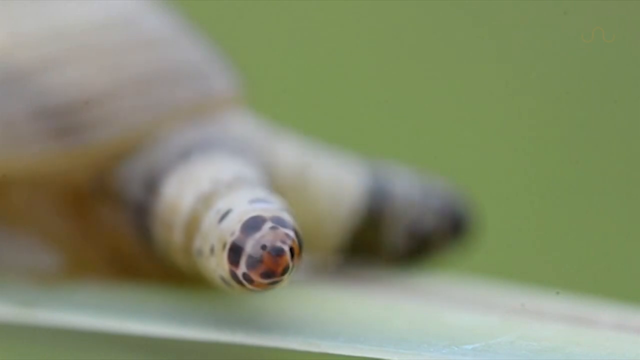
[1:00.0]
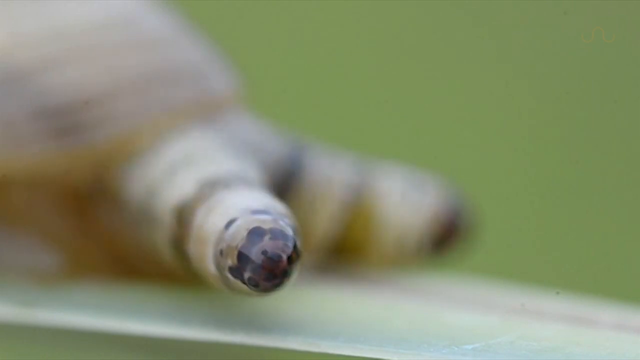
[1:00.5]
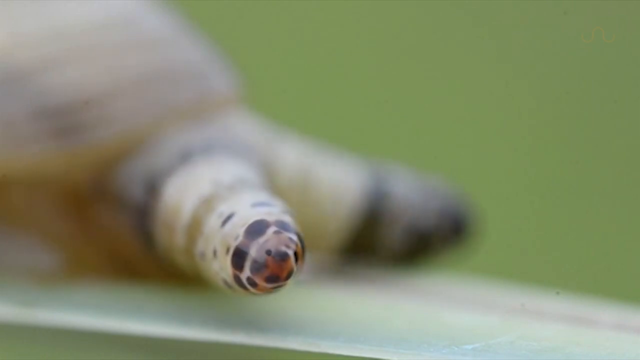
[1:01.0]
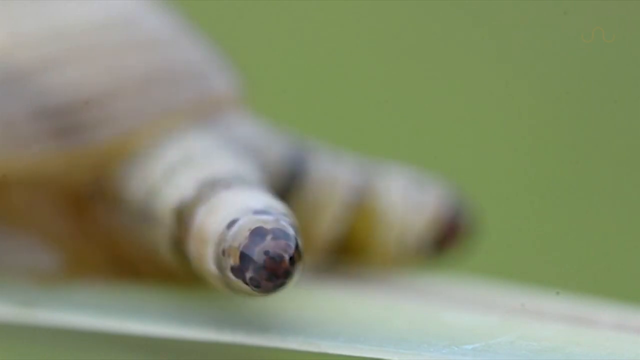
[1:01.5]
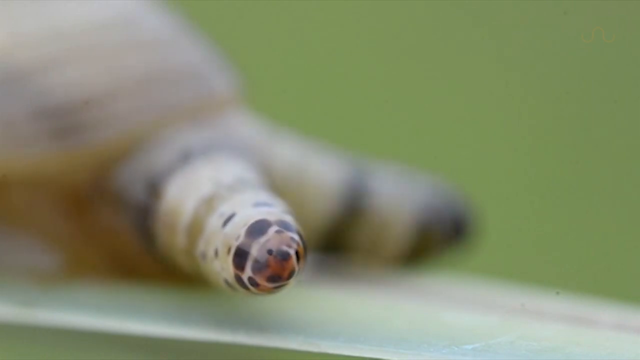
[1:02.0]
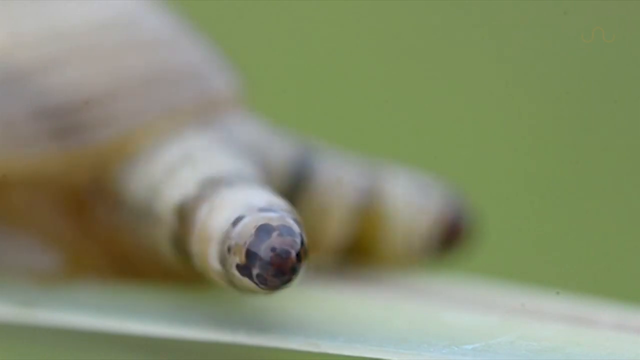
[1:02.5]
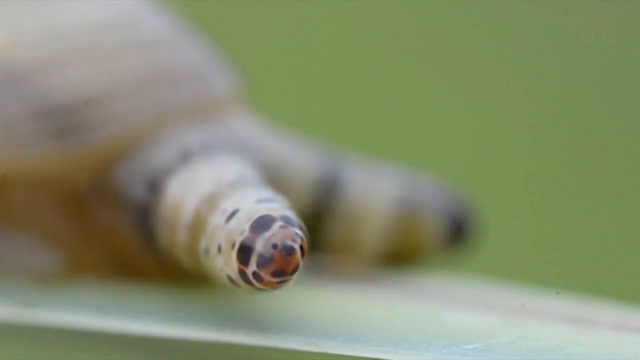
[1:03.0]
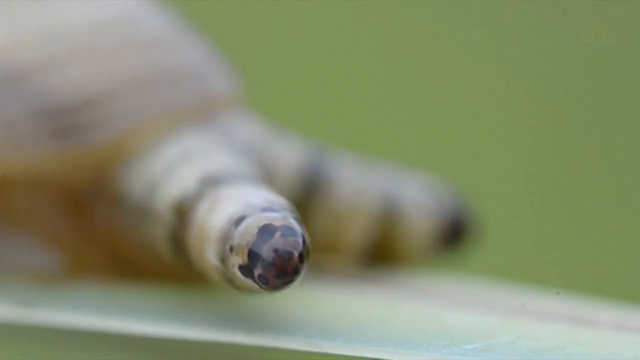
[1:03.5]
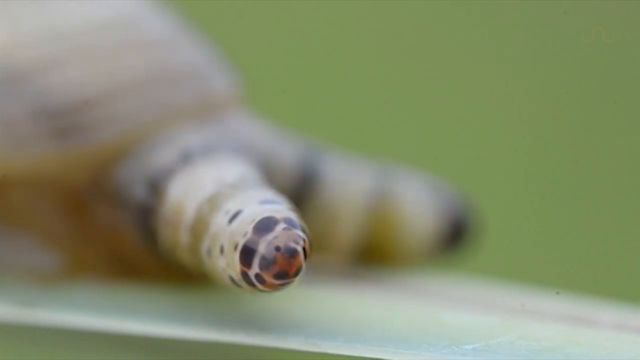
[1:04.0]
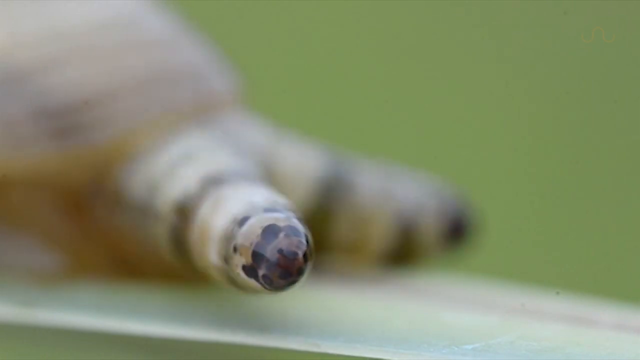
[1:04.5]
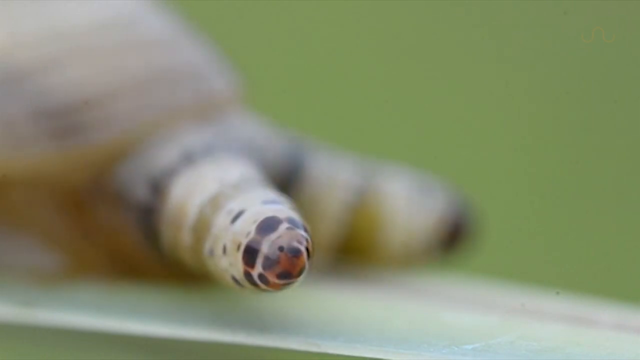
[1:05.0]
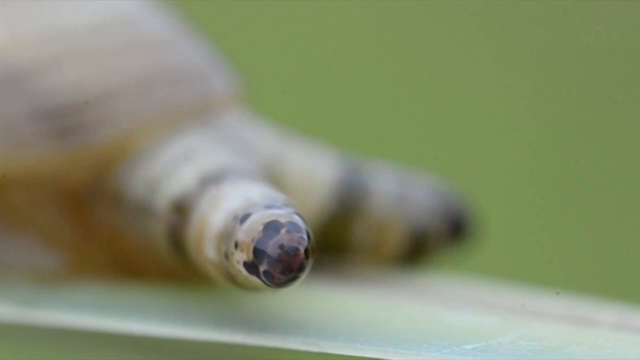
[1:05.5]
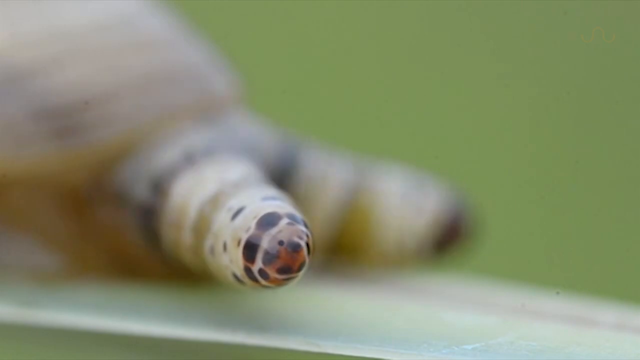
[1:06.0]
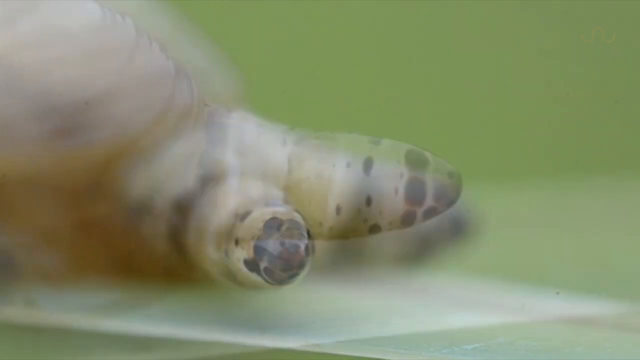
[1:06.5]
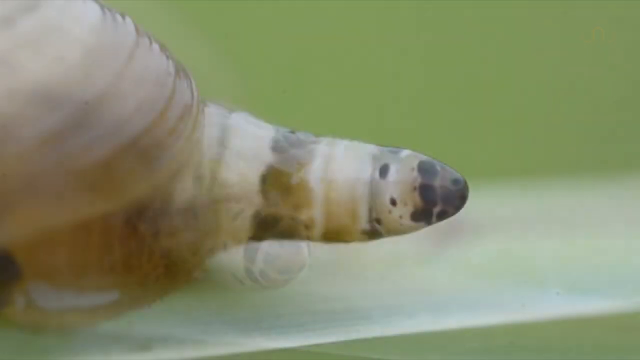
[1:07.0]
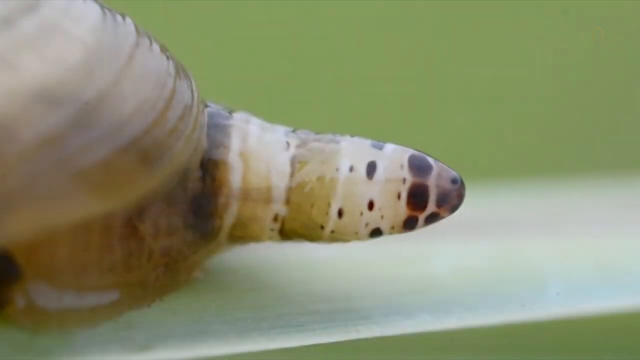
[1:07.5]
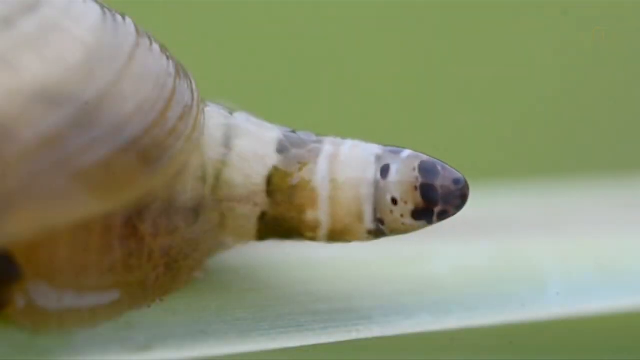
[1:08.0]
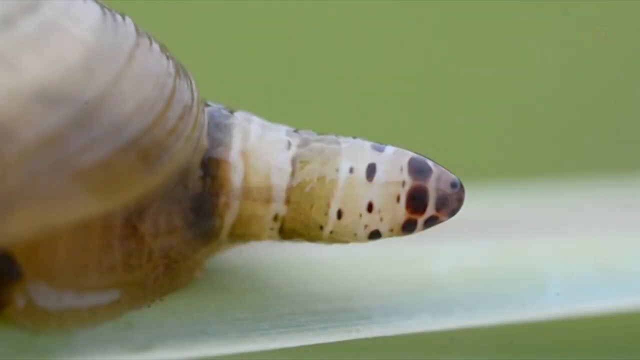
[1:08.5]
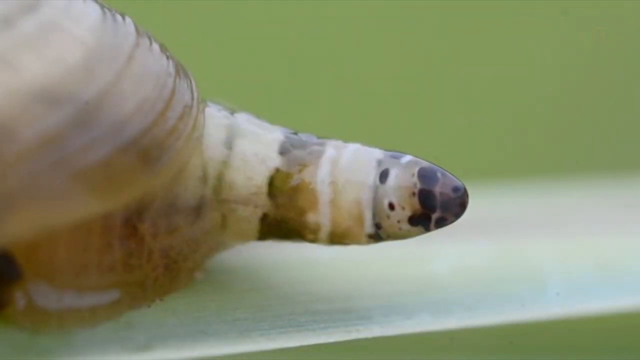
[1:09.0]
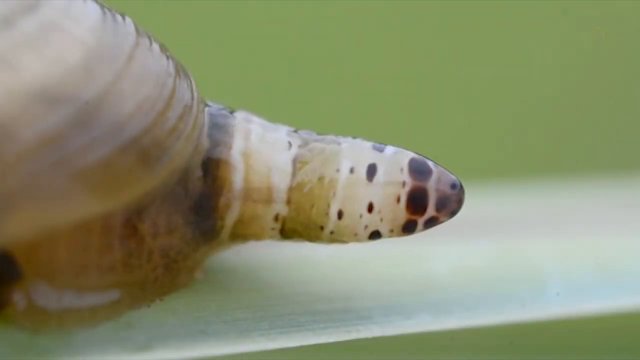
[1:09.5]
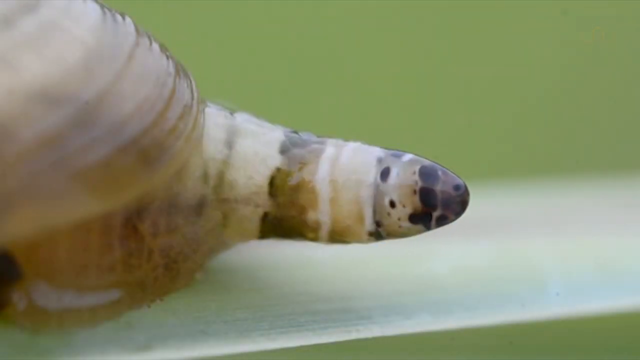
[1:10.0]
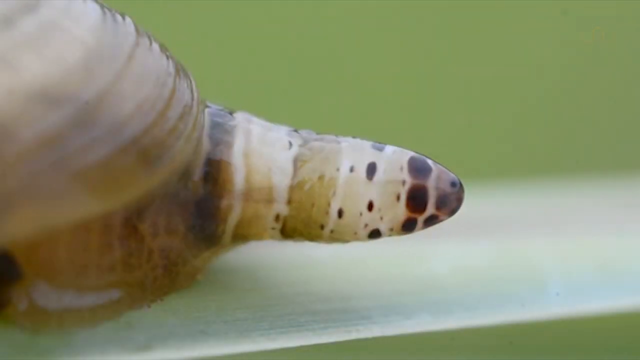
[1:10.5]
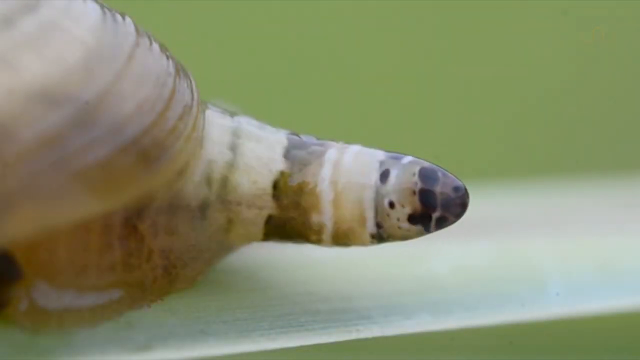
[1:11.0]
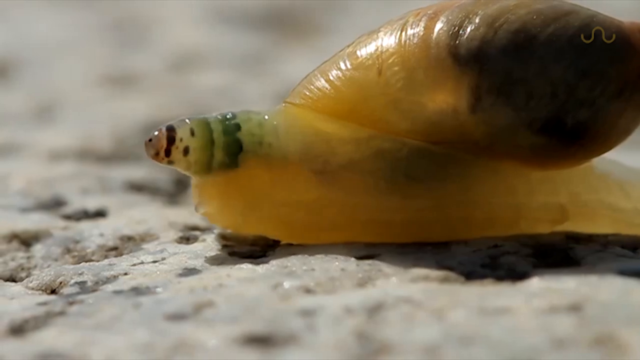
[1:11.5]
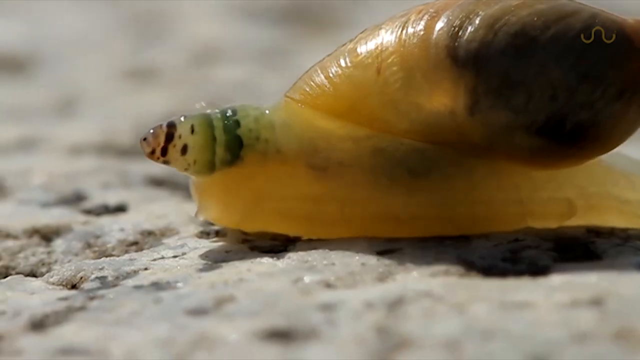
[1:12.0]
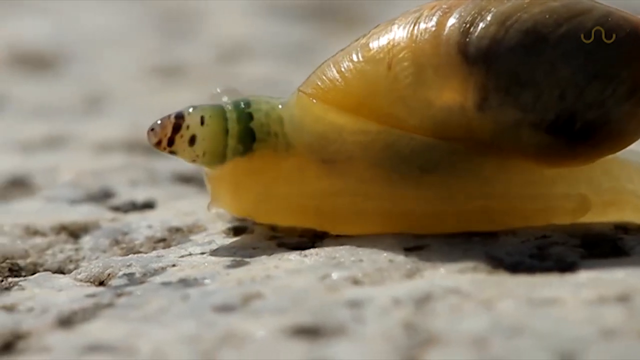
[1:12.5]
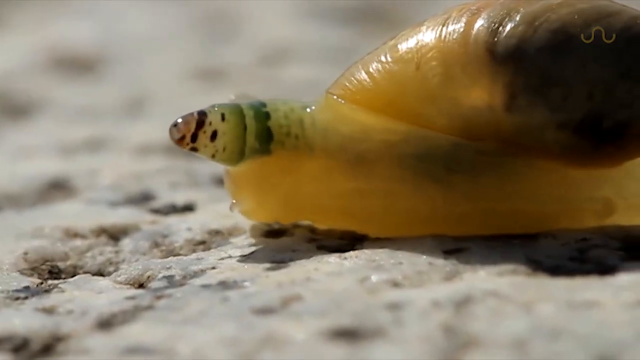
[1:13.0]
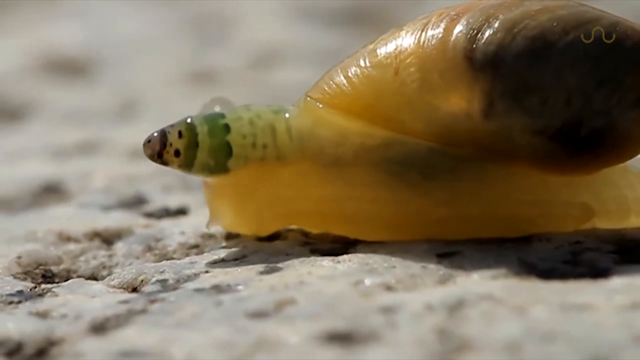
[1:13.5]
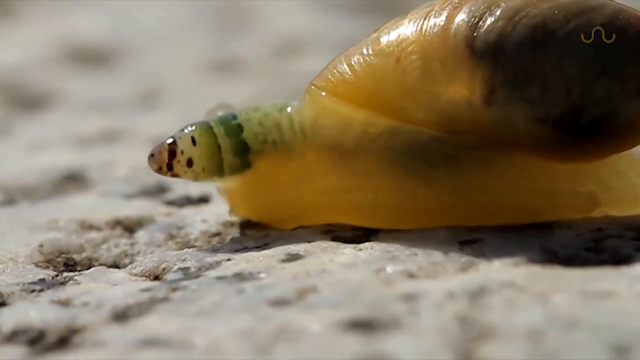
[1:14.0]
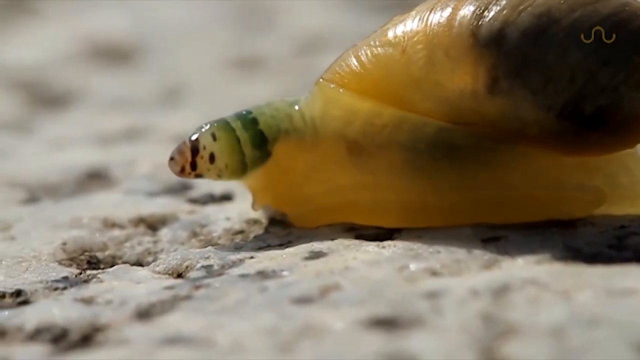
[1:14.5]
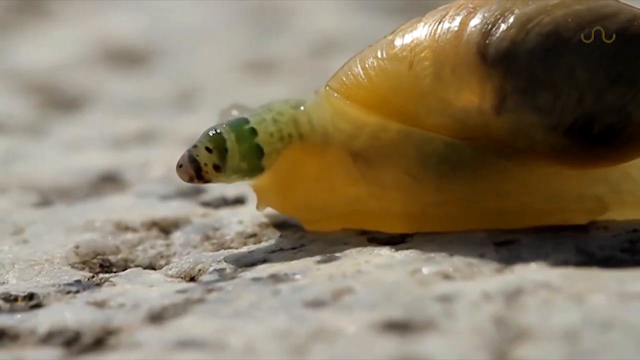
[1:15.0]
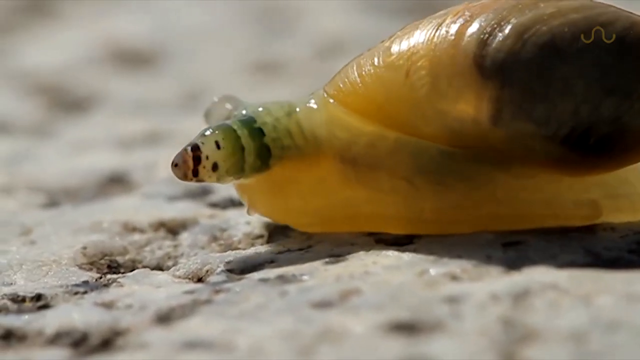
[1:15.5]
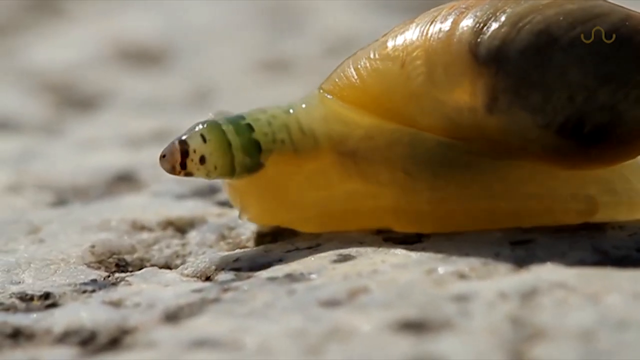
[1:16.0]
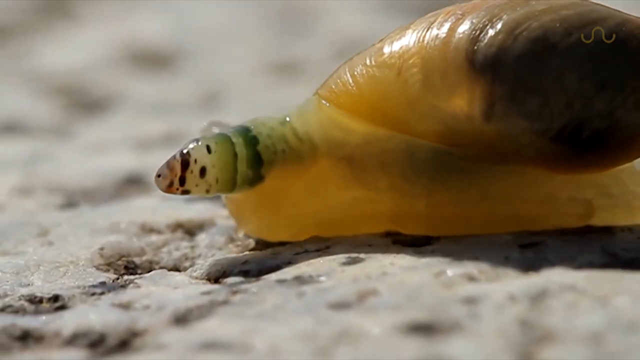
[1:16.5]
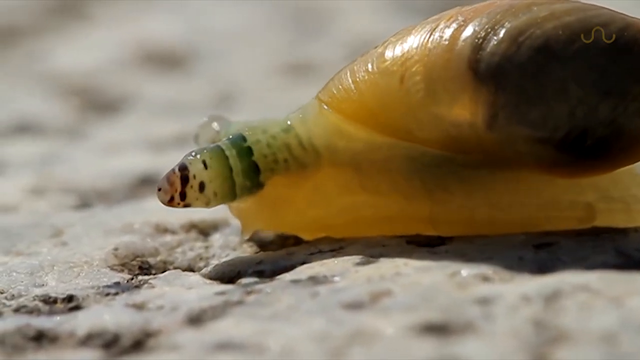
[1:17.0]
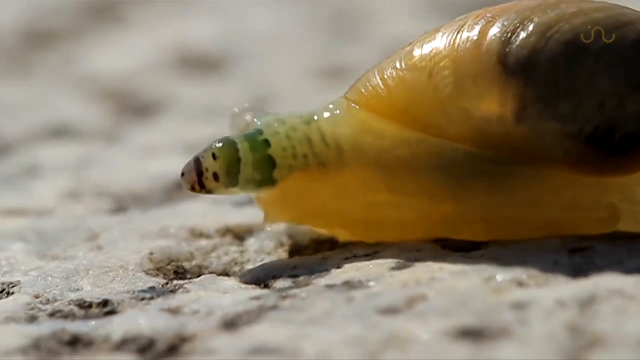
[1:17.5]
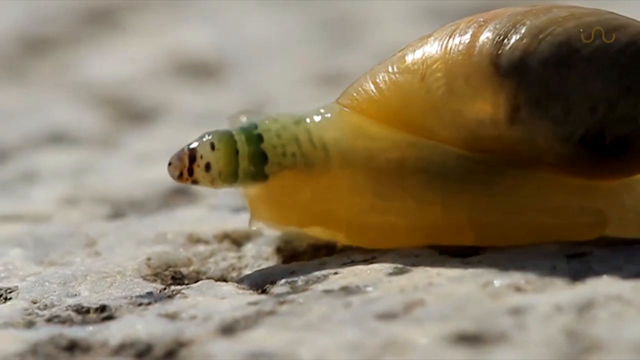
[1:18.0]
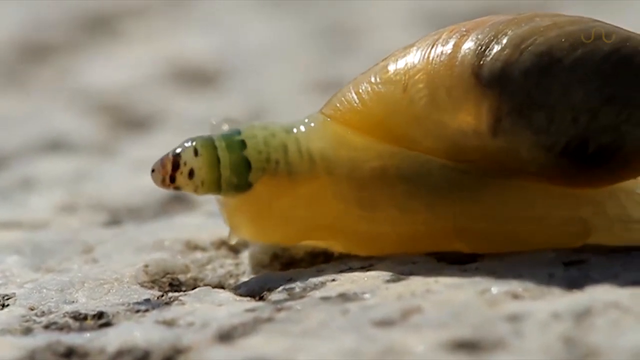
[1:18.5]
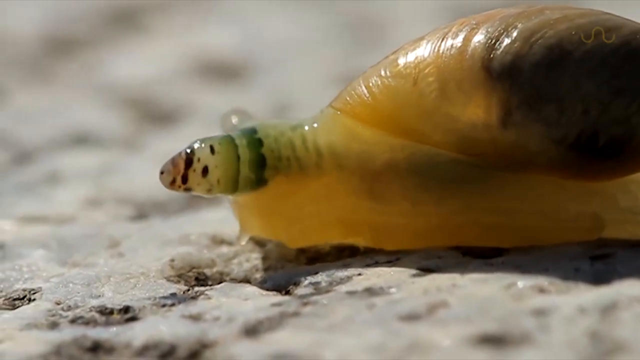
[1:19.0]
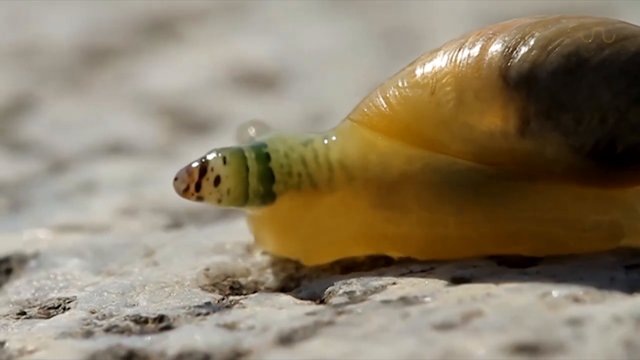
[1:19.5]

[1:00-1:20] A creature that looks somewhat like a snail has two antennae coming out of its top. The camera is zoomed in on them, so the background is rather blurry and just the protrusions are visible, seeming to go back and forth. Then the creature itself starts moving, apparently gliding on a surface very slowly toward the left of the frame. As it goes, some areas of its body look somewhat opaque and see-through, with green areas visible through a beige area, and the whole back portion looks brown. The antennae protrude and then go back in, in and out, almost like a turtle going into its shell. The snail looks like it would be rather squishy.